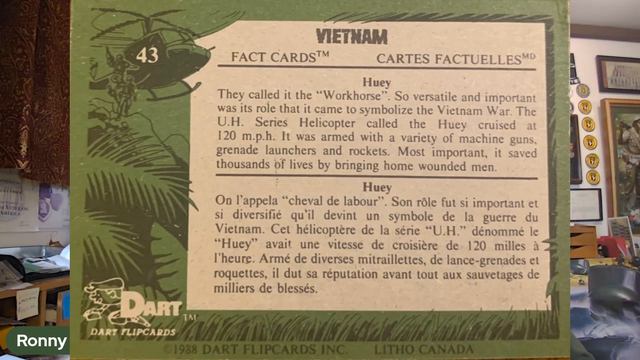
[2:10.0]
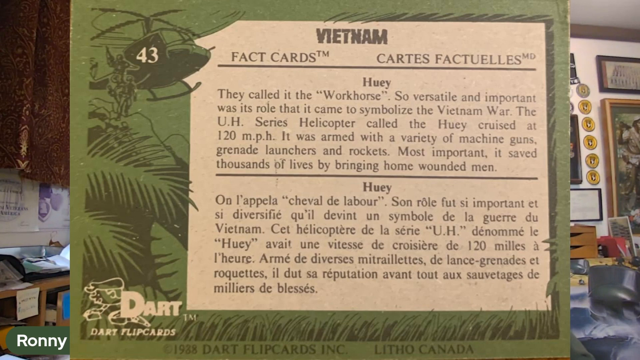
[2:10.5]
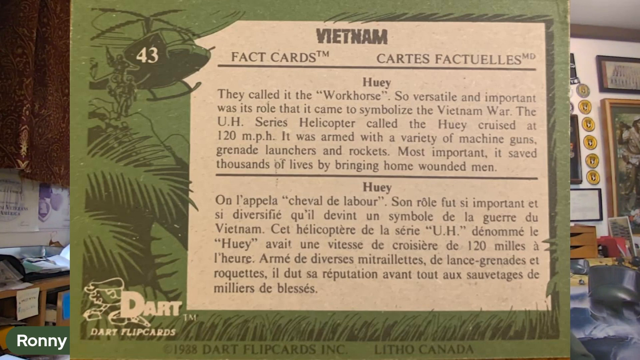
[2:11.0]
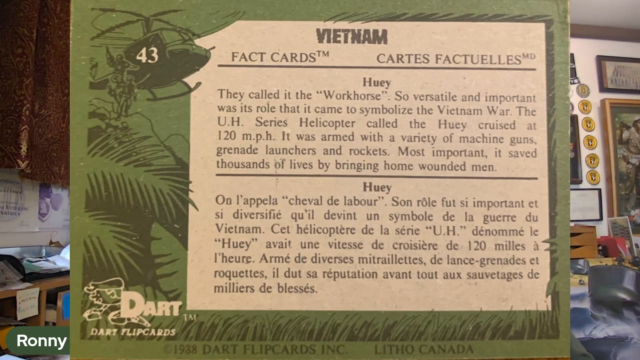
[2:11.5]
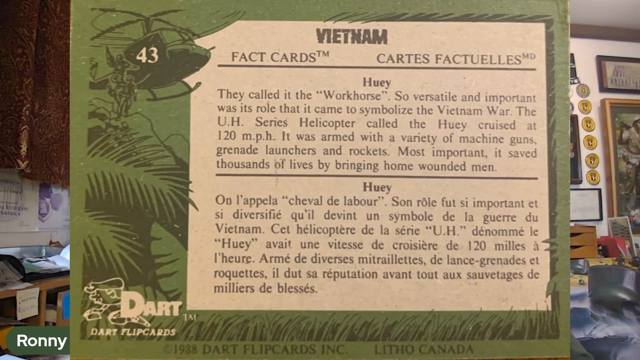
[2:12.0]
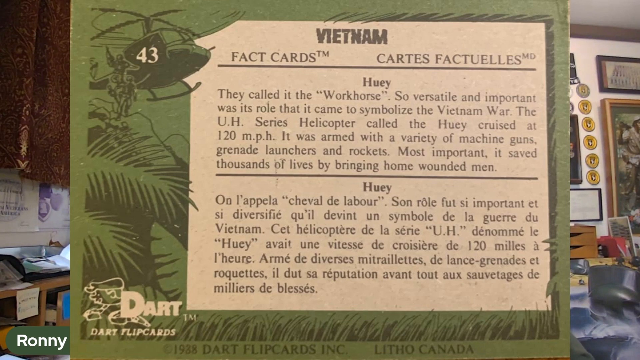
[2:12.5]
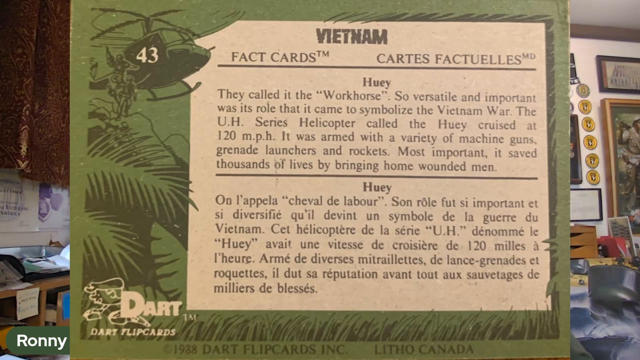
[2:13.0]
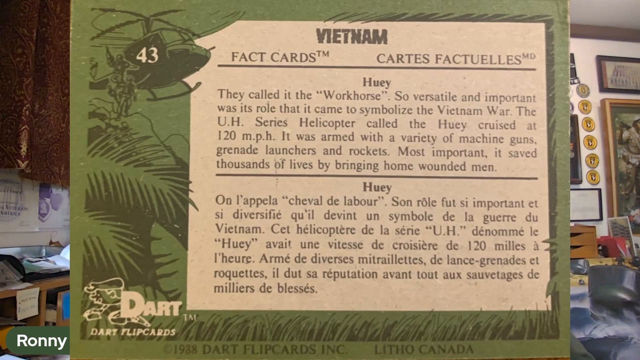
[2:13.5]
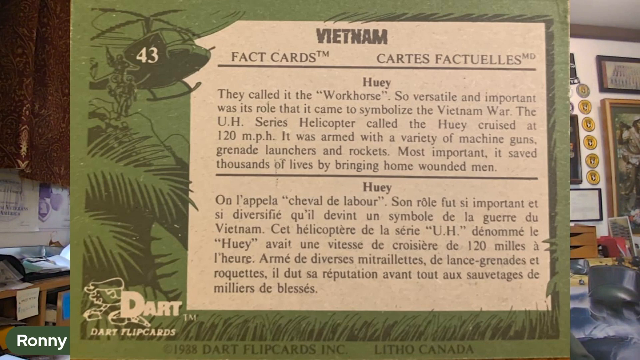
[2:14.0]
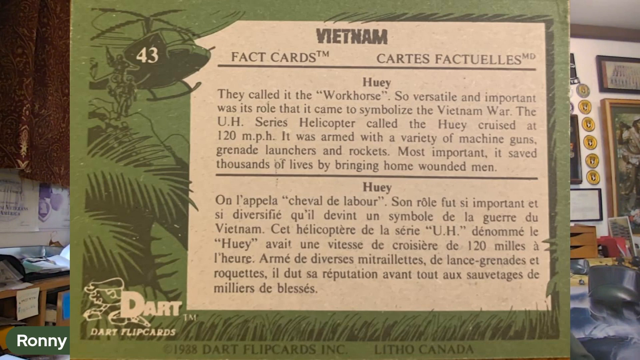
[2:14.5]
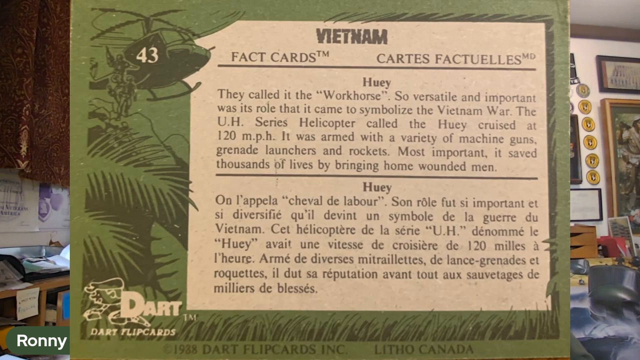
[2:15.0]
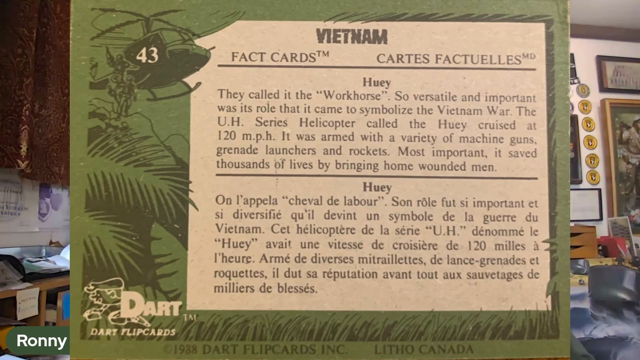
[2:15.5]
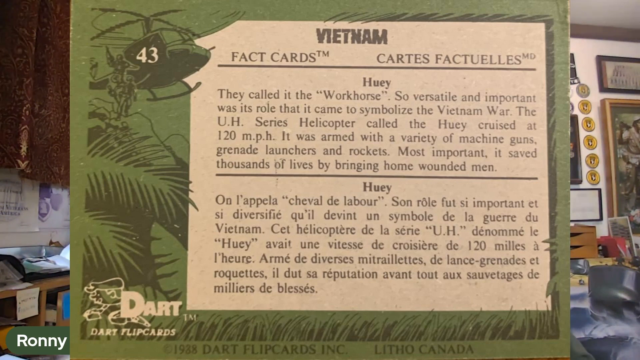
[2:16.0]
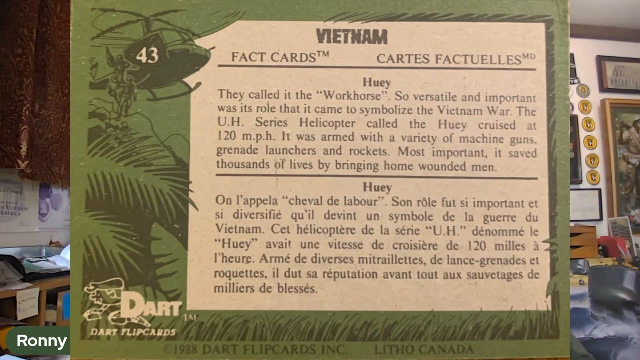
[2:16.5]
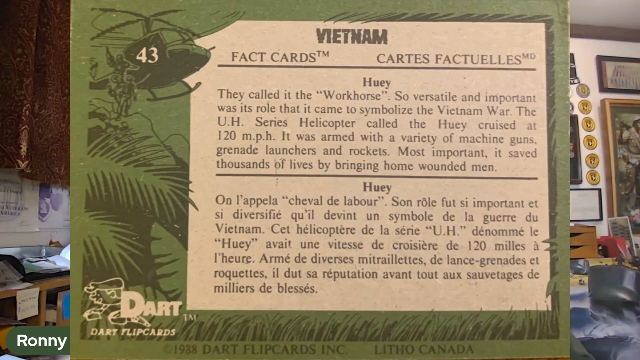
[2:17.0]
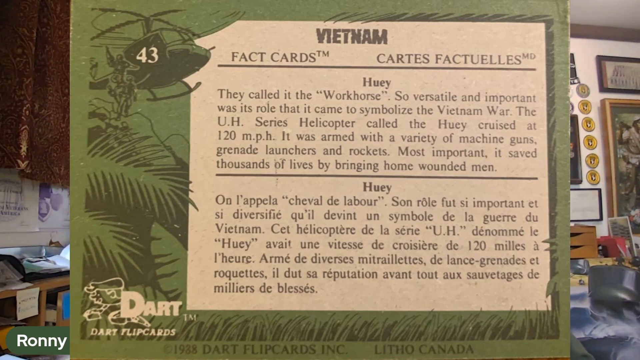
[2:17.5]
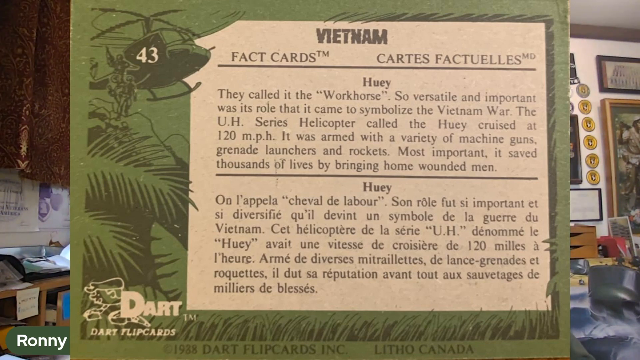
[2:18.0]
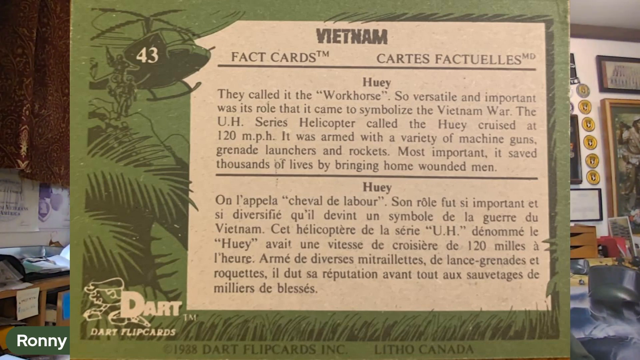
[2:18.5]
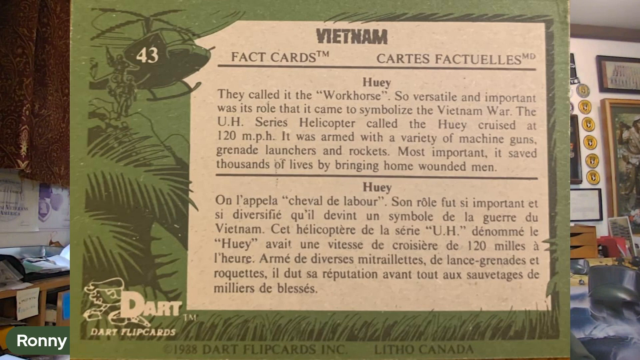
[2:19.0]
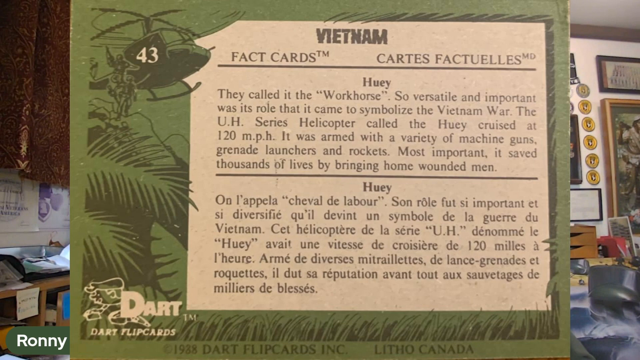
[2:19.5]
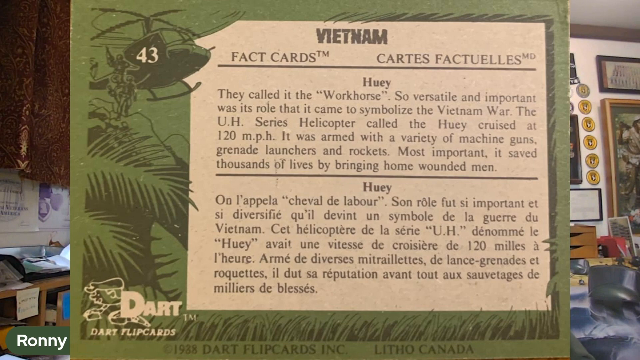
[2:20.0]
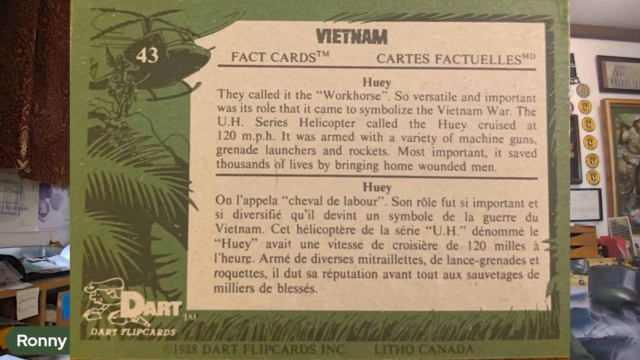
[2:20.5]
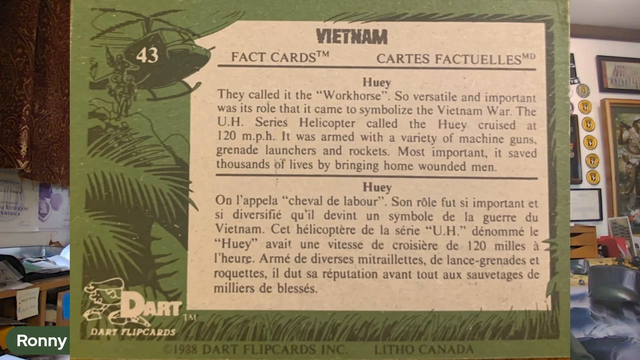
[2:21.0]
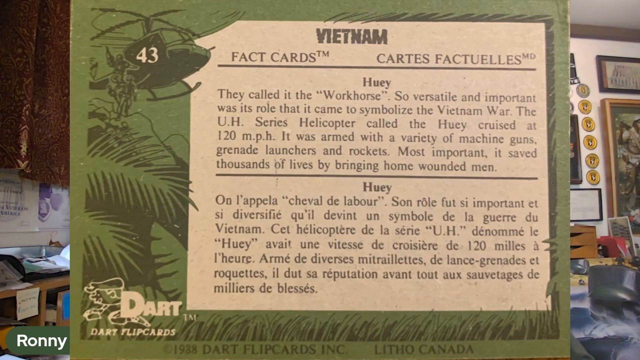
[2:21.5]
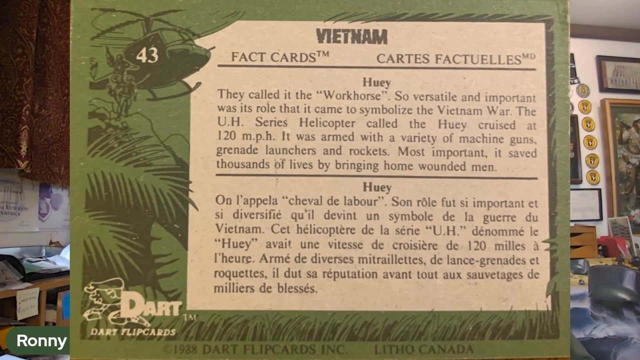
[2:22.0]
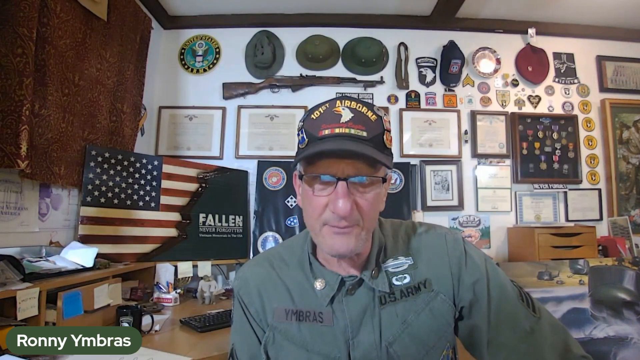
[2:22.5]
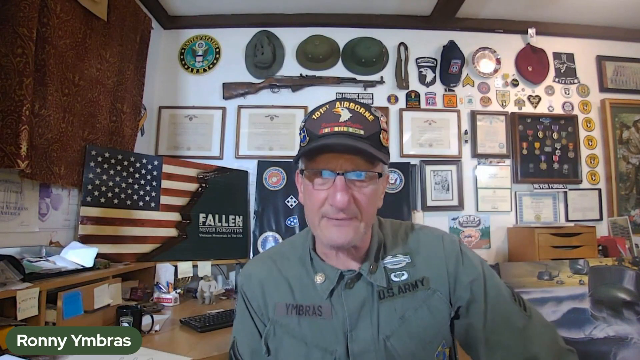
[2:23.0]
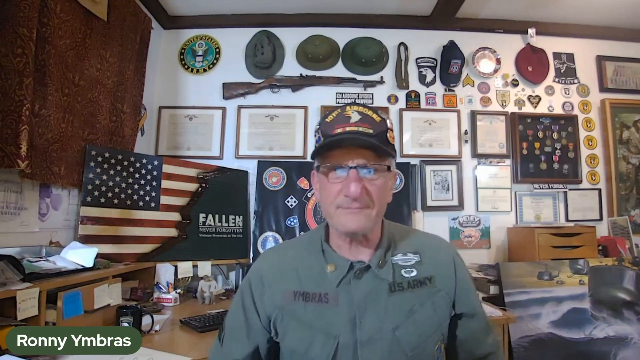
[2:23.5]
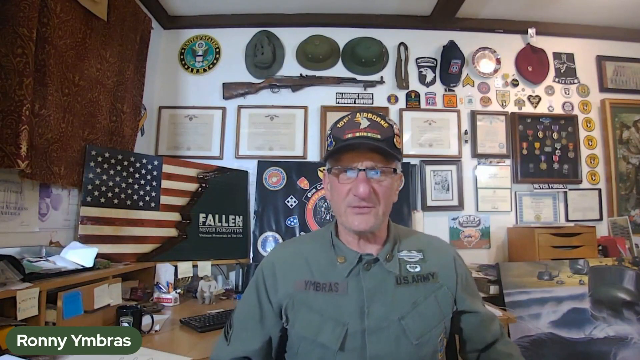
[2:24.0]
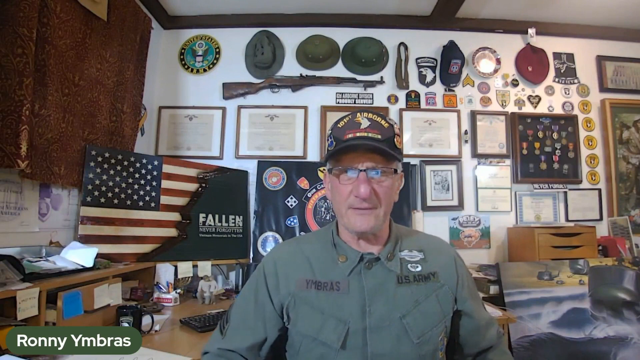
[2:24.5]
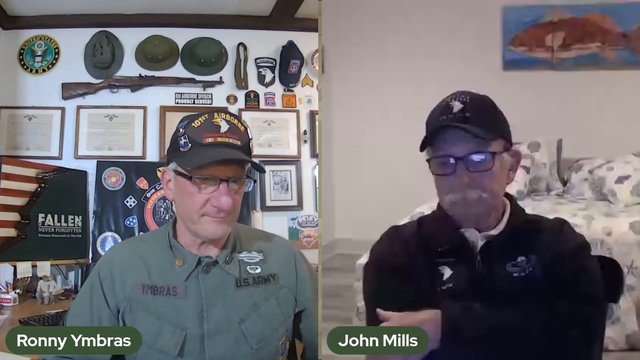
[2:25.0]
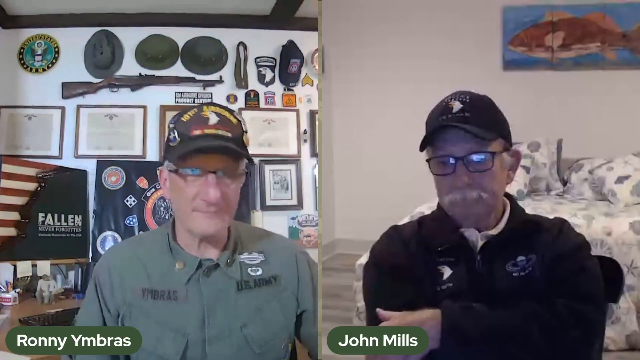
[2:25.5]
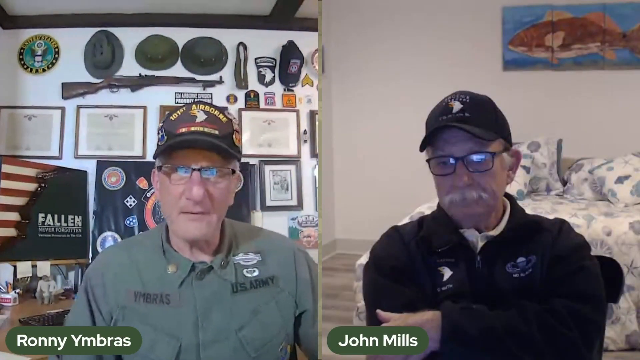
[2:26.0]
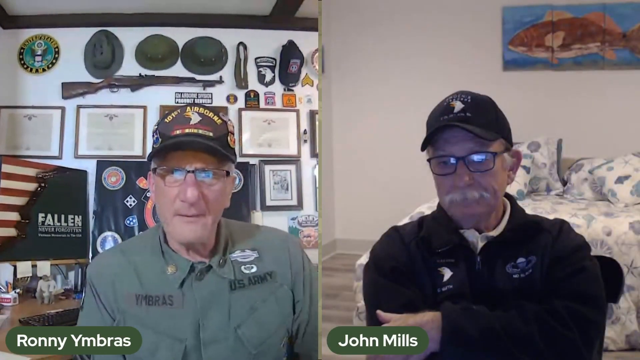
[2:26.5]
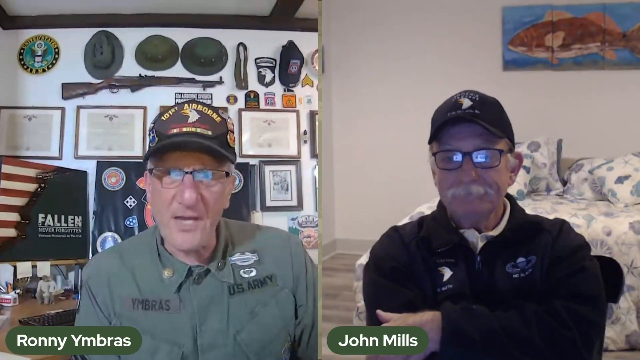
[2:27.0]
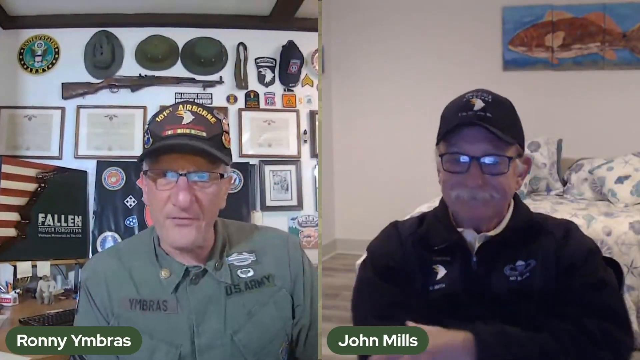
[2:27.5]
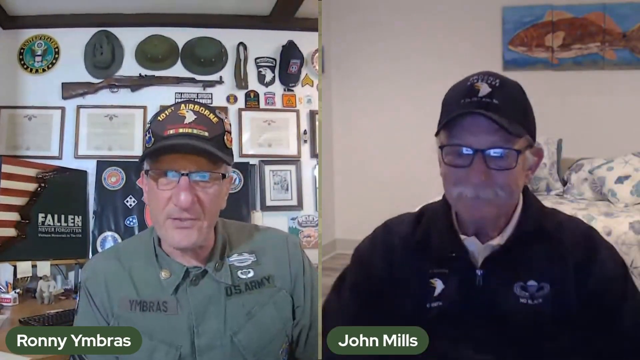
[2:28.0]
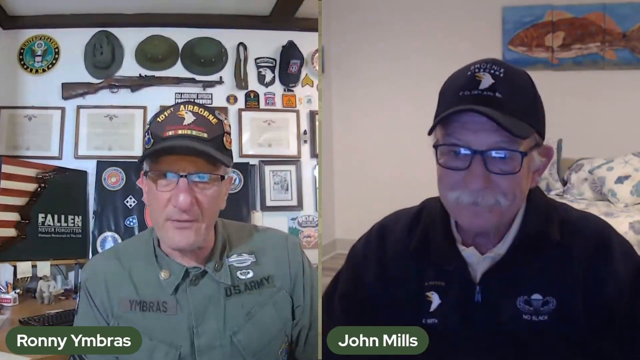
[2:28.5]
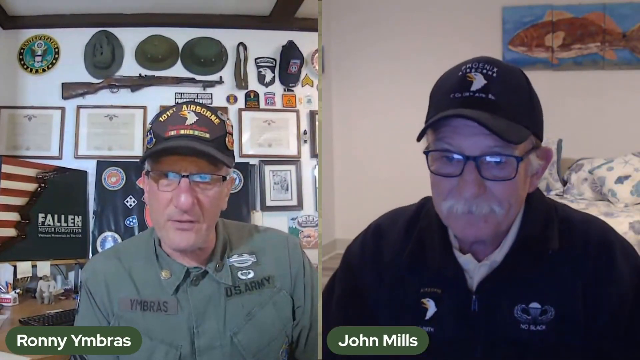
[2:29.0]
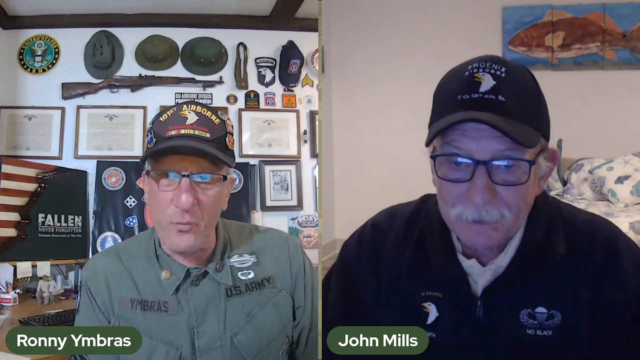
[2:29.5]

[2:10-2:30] A close-up shows Vietnam fact card number 43, marked "dart flip cards." It is green on the outside, with a helicopter and "voyage" on the left-hand side. The fact is about the Huey: a helicopter that could go 120 miles per hour, brought home wounded men and saved thousands; it was called the workhorse and was the symbol of the Vietnam War. The video goes back to Ronnie, who switches to a split screen with another man, John Mills. John is an older man who also wears a hat and has something reading Phoenix Airborne on; he also wears glasses and has a white mustache.